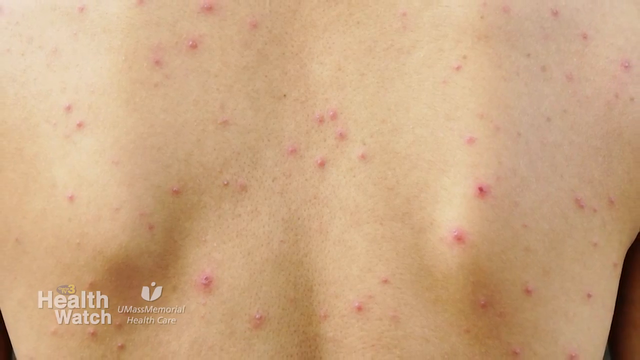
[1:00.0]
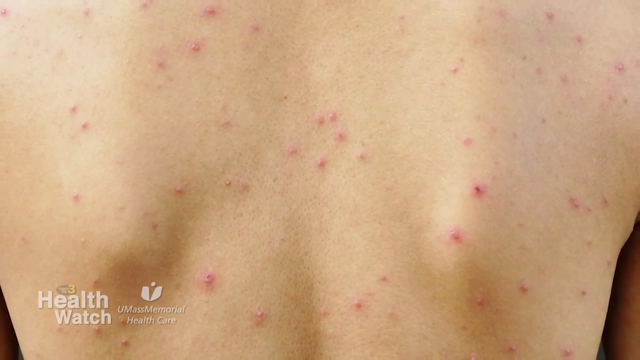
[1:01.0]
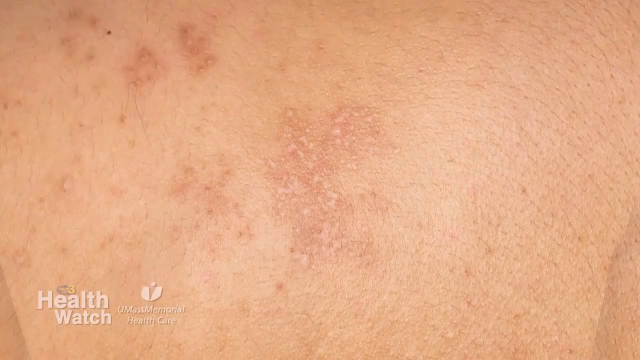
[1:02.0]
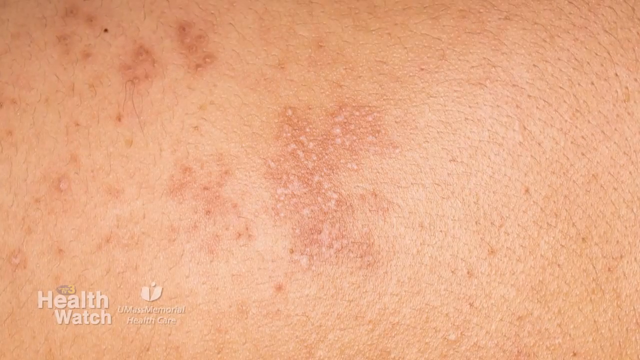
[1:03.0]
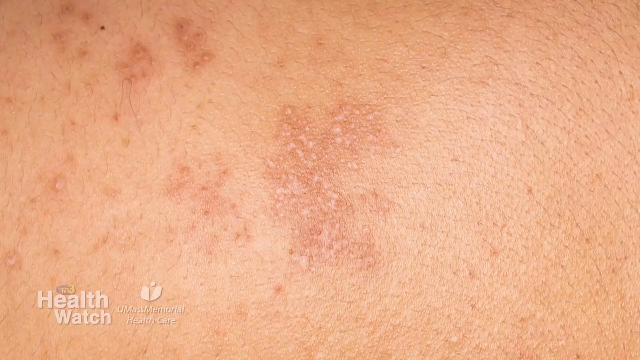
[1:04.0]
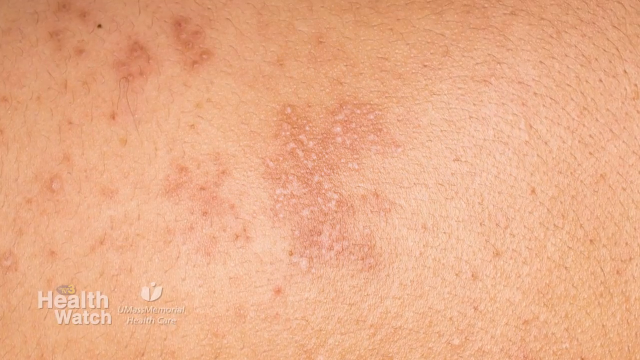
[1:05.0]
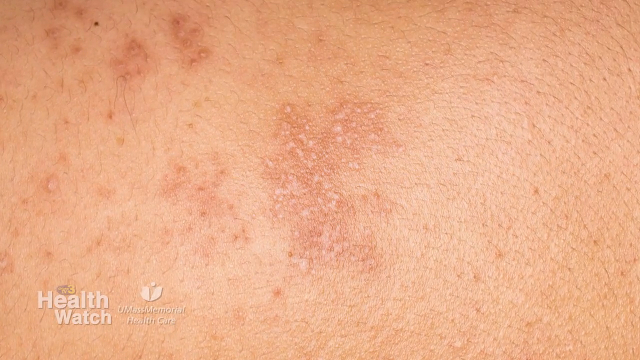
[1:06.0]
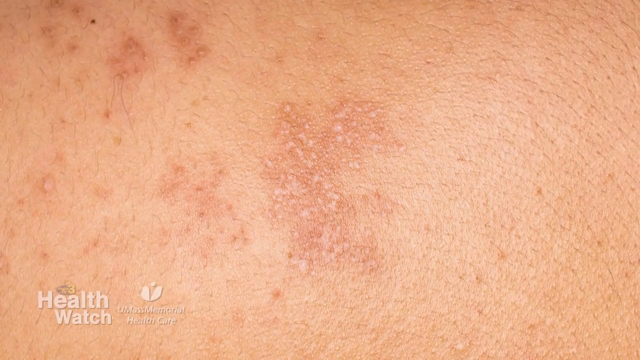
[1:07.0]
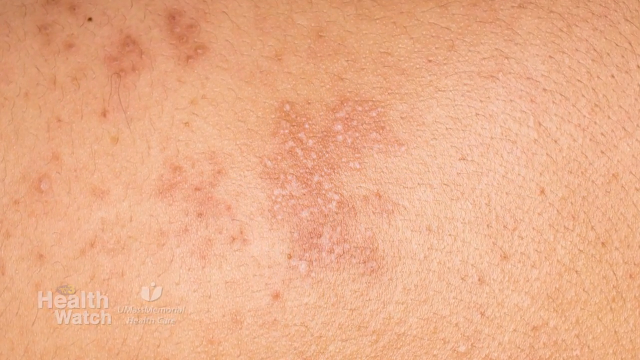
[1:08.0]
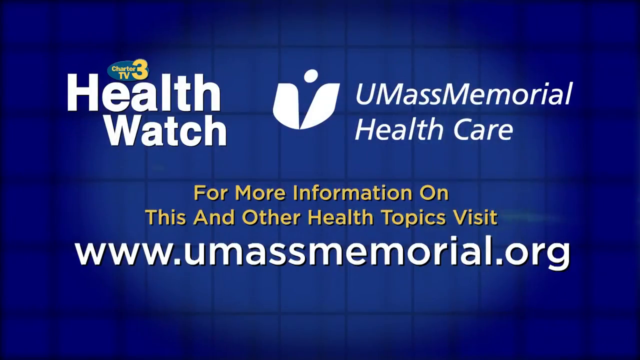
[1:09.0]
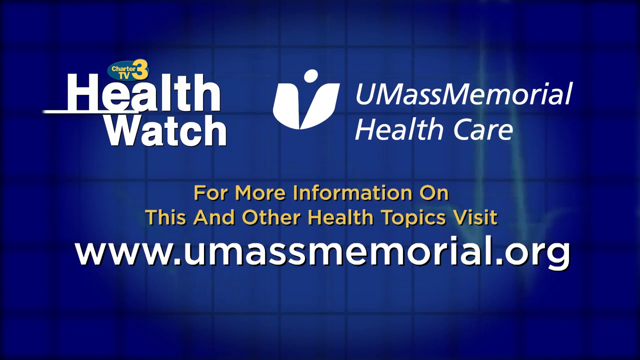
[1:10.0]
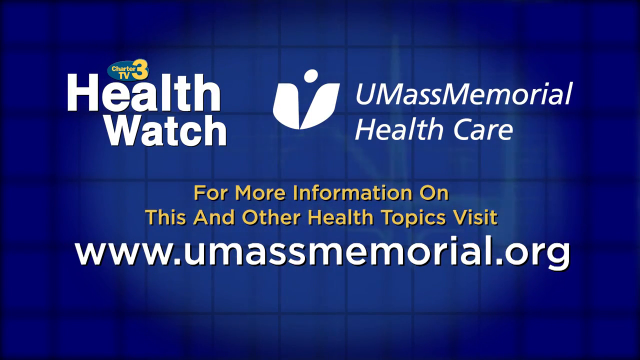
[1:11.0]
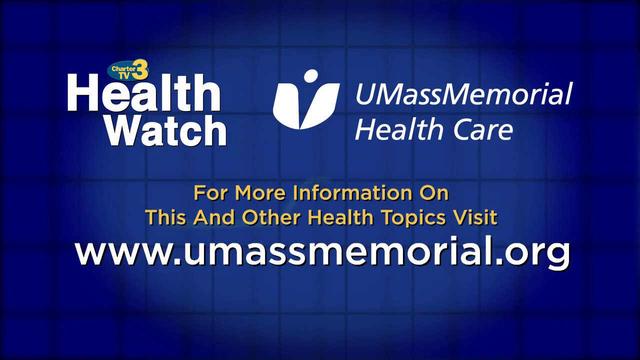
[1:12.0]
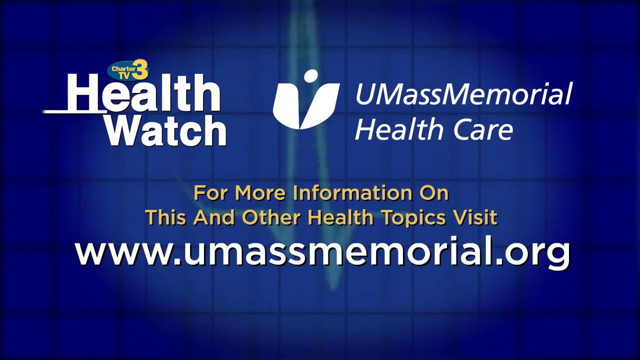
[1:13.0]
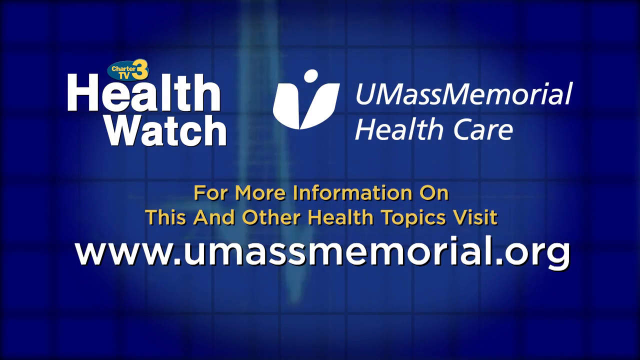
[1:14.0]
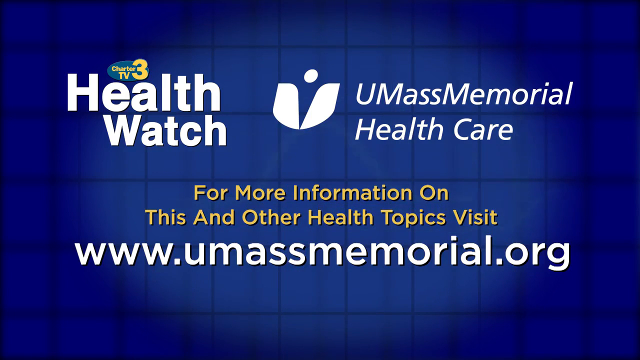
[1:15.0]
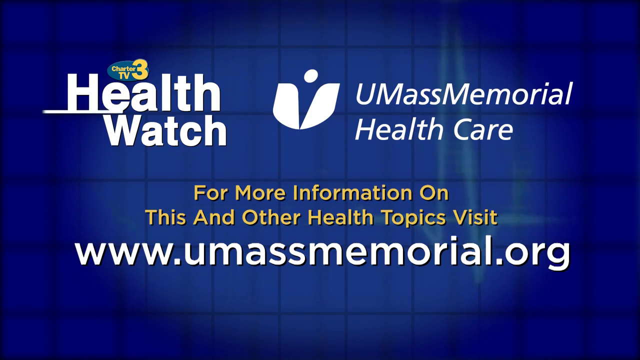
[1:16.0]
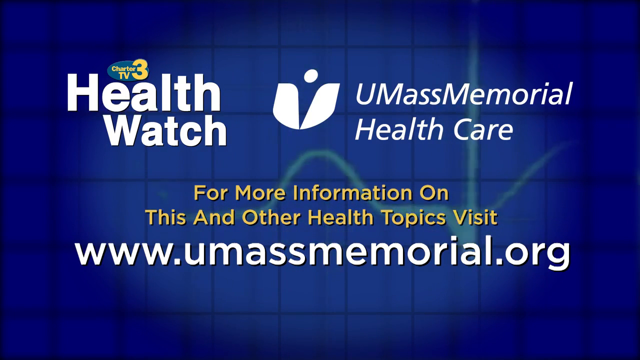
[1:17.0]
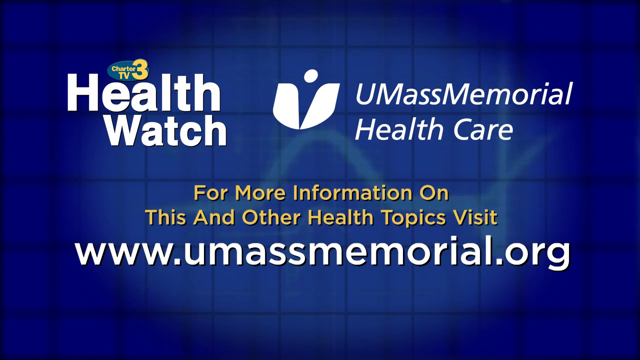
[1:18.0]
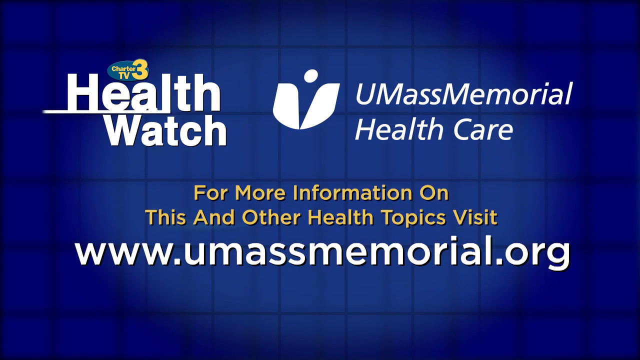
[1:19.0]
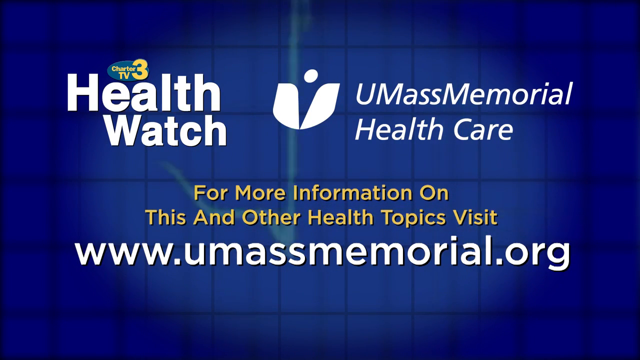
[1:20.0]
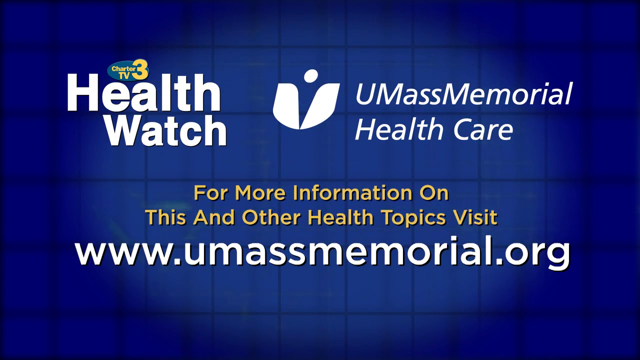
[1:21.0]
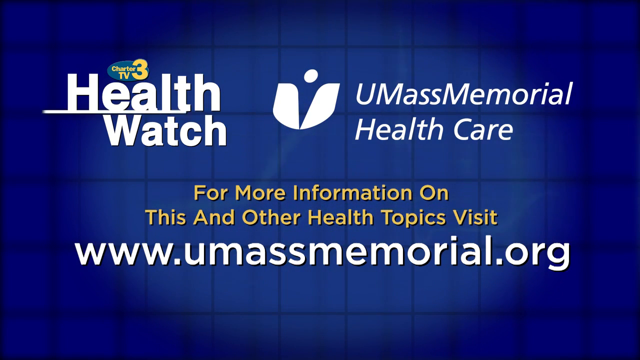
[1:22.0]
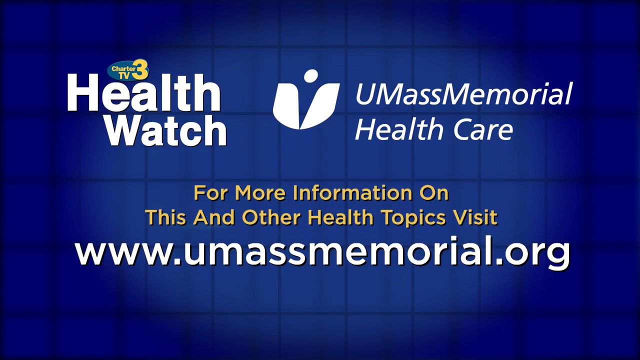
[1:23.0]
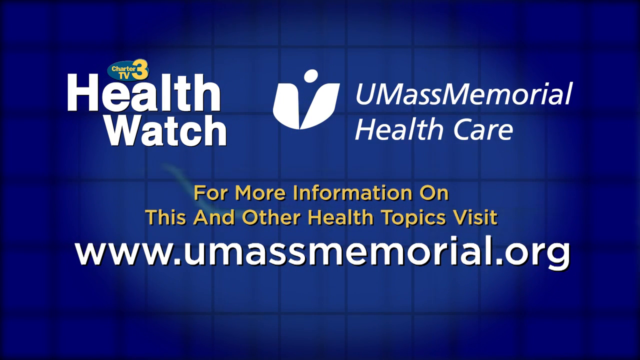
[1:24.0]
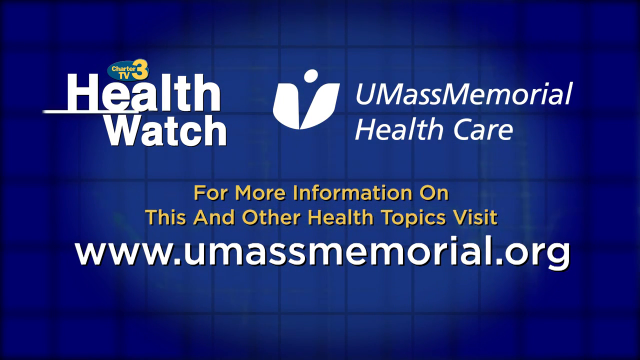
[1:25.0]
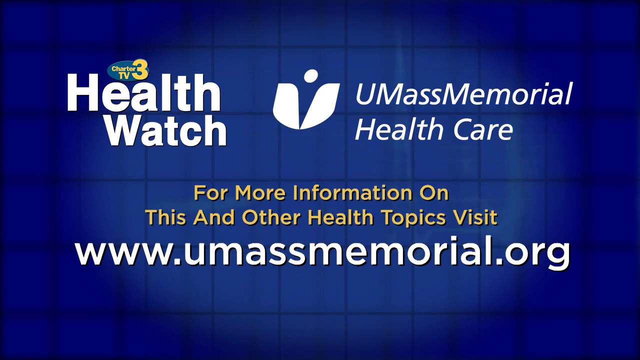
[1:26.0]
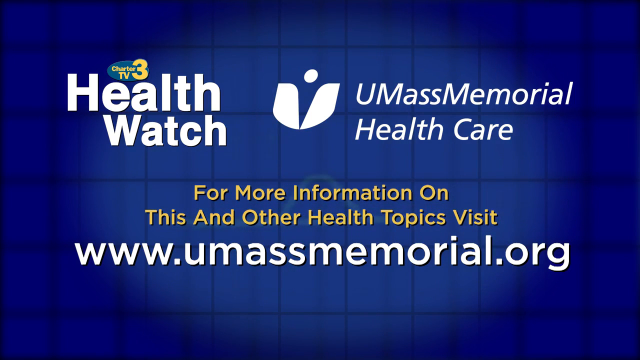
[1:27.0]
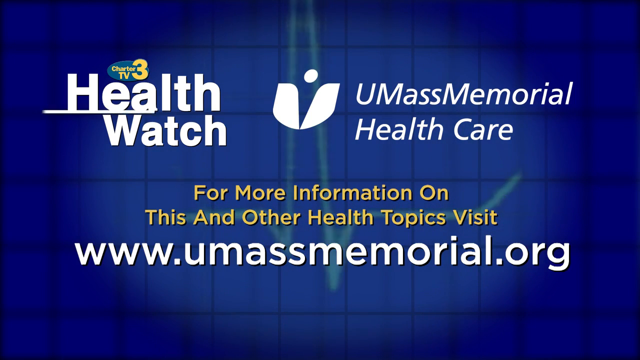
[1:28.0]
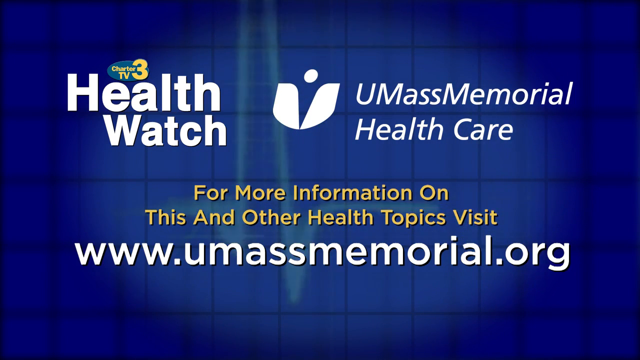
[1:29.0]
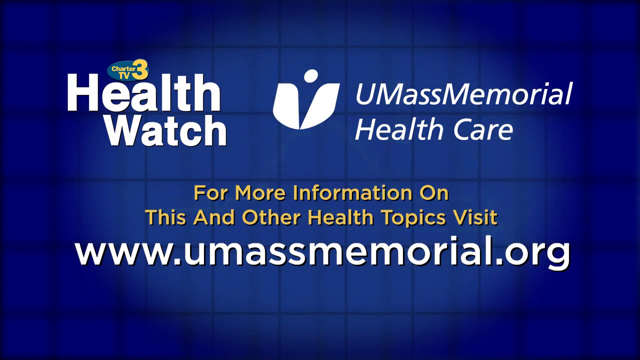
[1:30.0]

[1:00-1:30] A picture shows the back of a person with many pink and red spots that look almost like acne. The picture changes to another rash, which looks like it could also be on the back; this person's skin is a little darker, so the rash looks less pink. It looks pretty flat, and the spots are not too big. Before the video ends, text on screen reads "Charter TV 3, Health Watch, UMass Memorial Healthcare. For more information on this and other health topics, visit www.umassmemorial.org." This stays on screen for a while at the end of the video. The people with these rashes appear to be younger, judging by skin that does not look wrinkly.